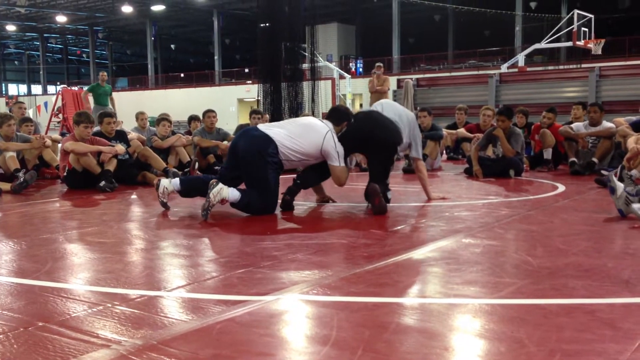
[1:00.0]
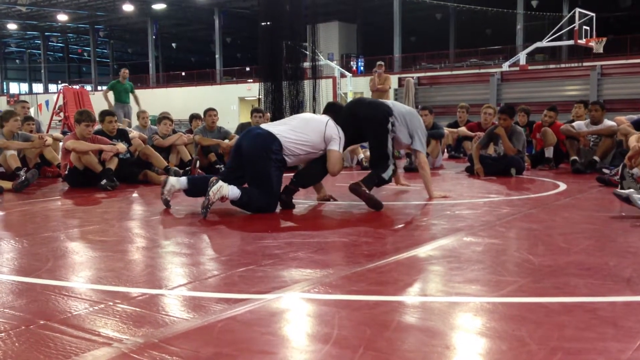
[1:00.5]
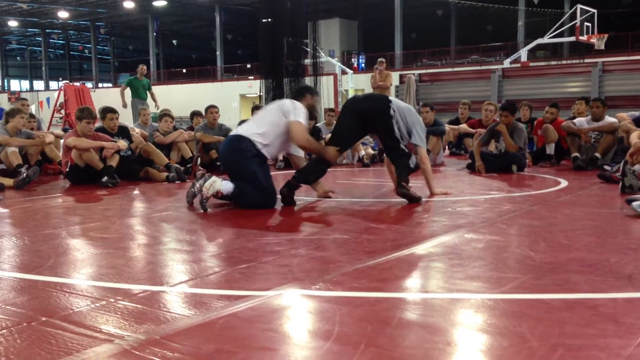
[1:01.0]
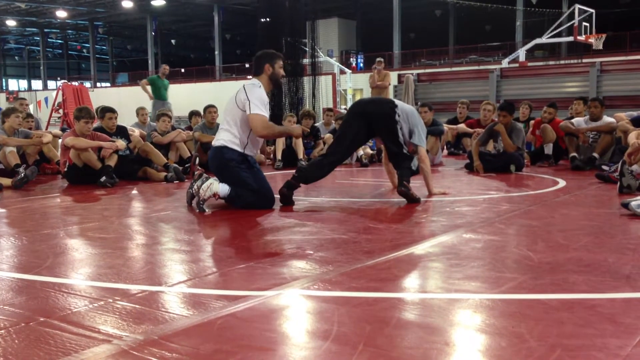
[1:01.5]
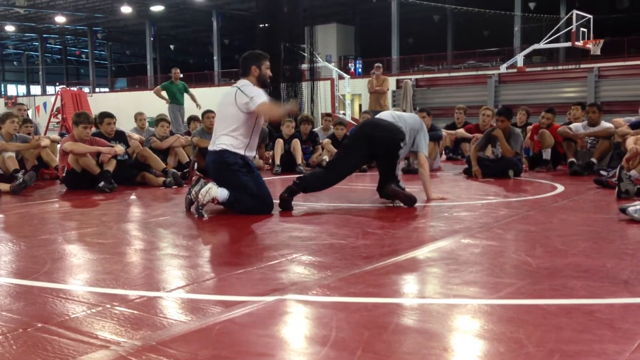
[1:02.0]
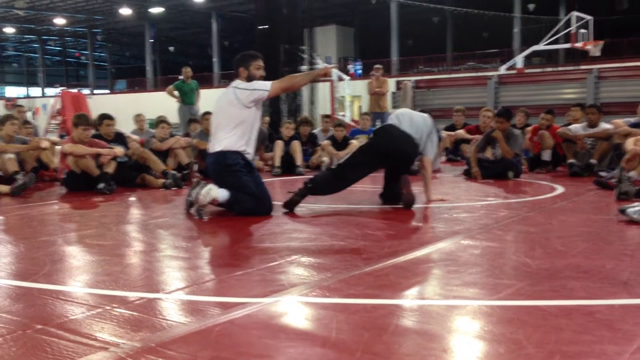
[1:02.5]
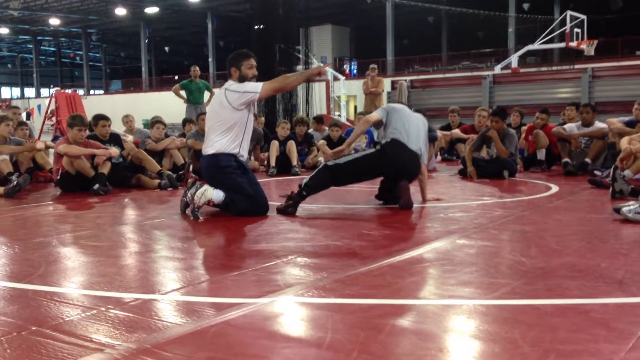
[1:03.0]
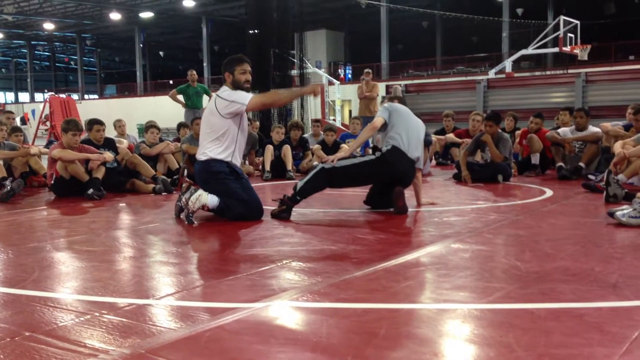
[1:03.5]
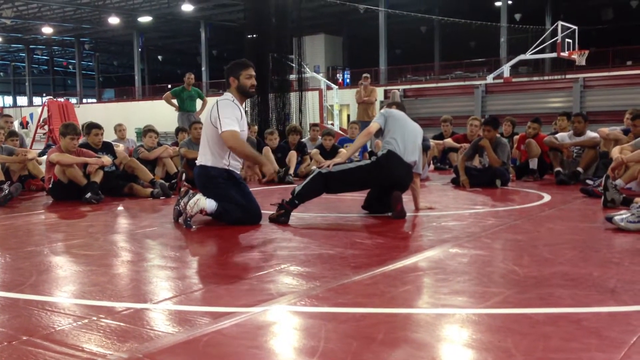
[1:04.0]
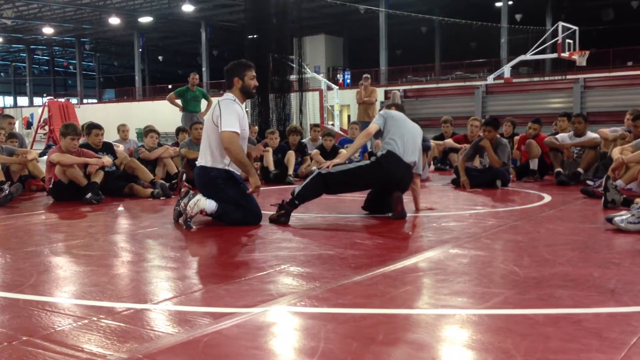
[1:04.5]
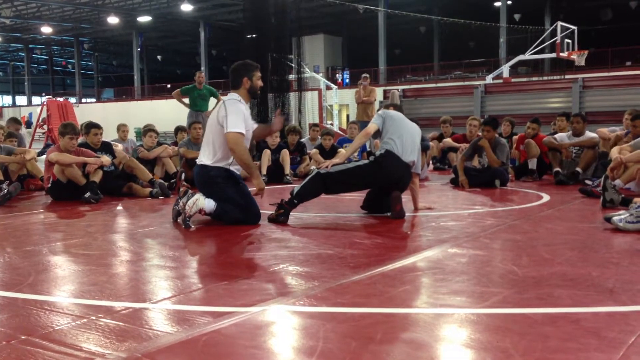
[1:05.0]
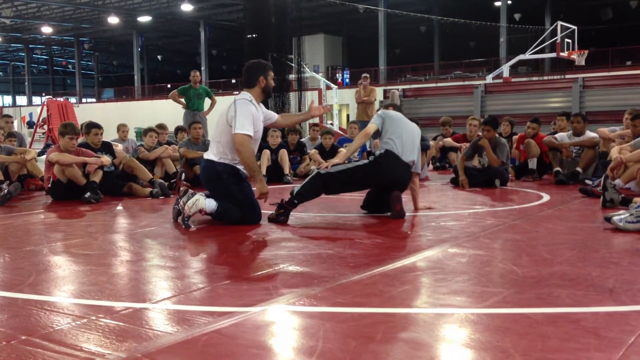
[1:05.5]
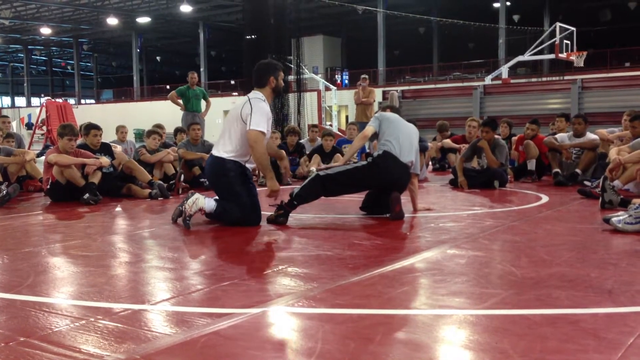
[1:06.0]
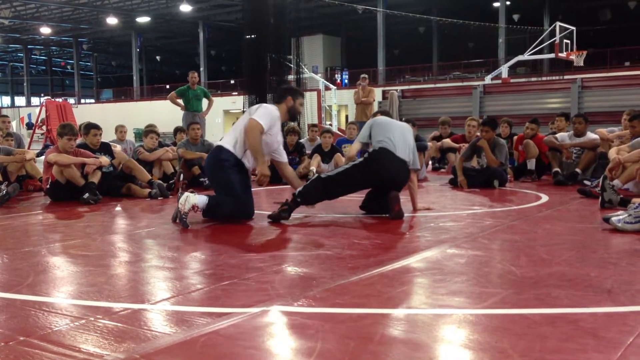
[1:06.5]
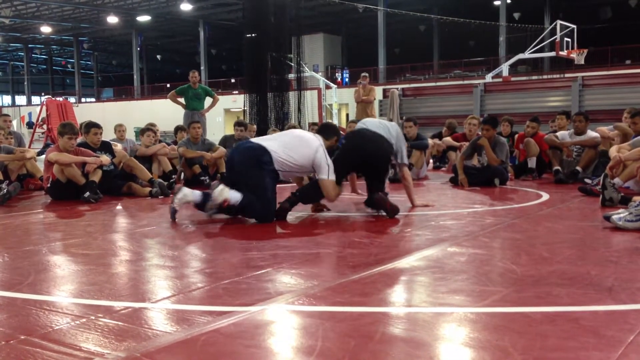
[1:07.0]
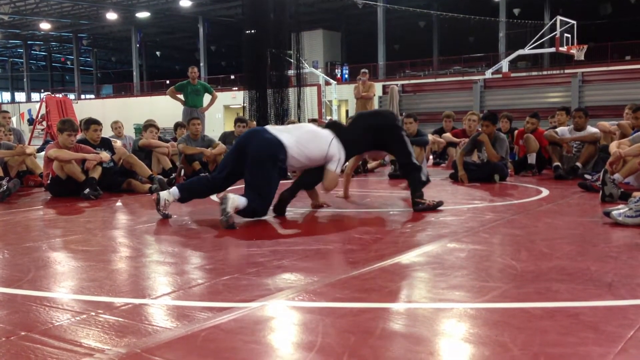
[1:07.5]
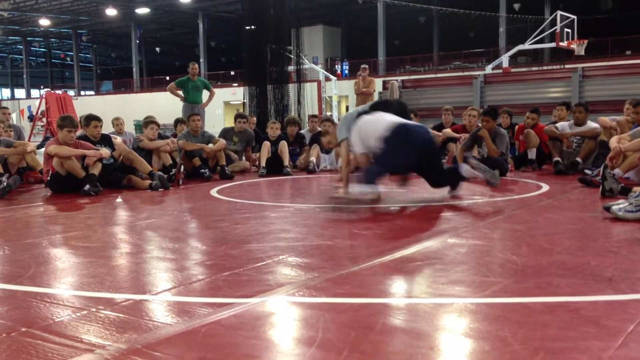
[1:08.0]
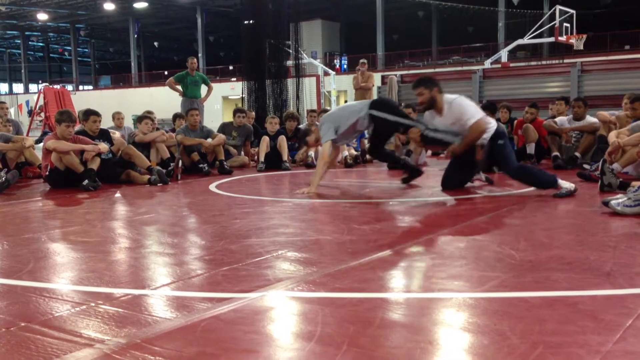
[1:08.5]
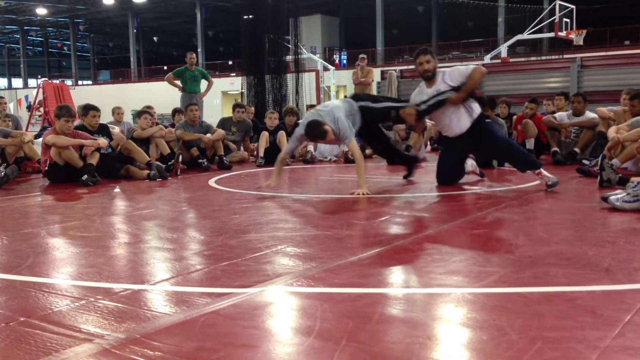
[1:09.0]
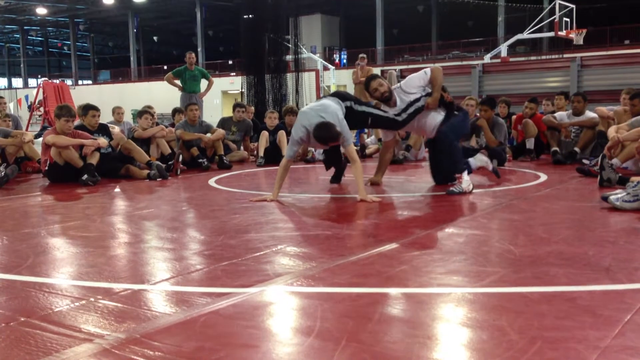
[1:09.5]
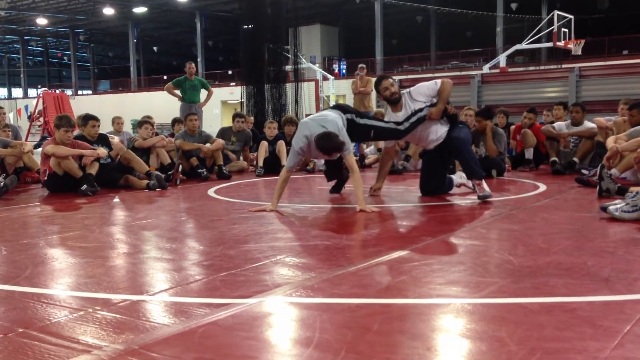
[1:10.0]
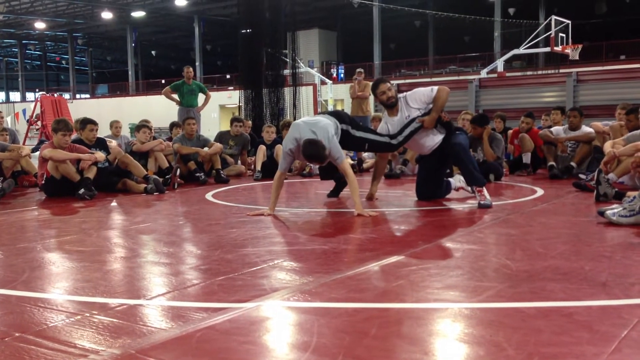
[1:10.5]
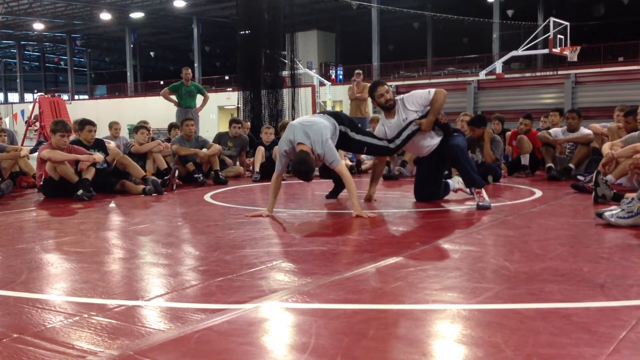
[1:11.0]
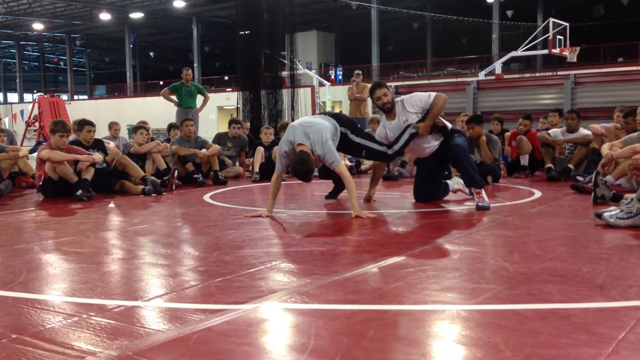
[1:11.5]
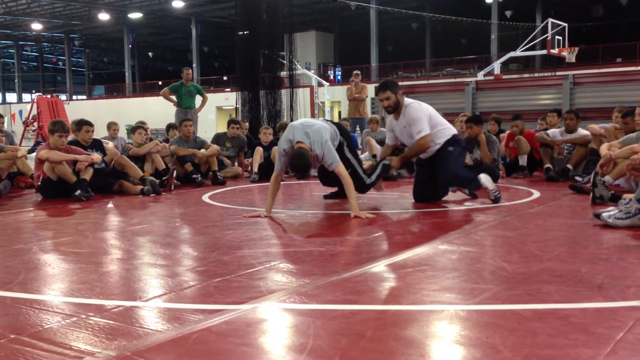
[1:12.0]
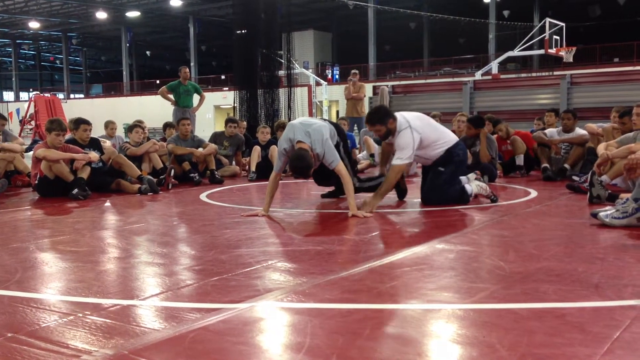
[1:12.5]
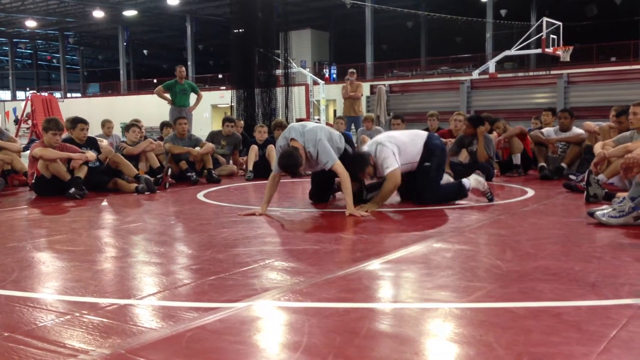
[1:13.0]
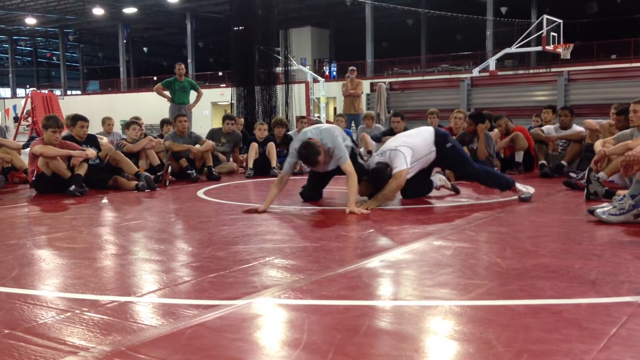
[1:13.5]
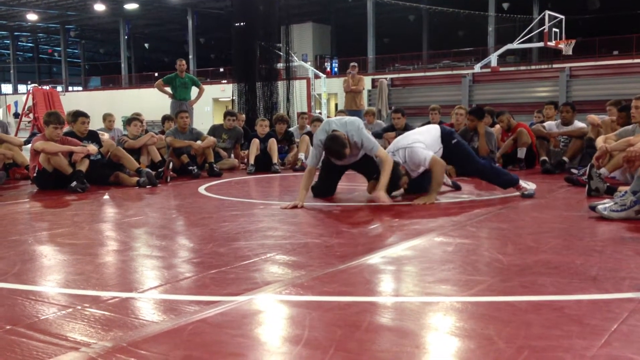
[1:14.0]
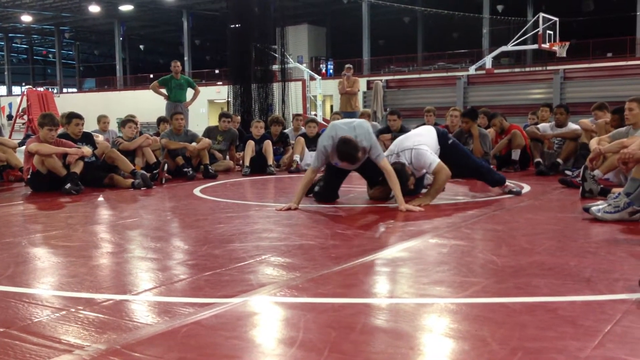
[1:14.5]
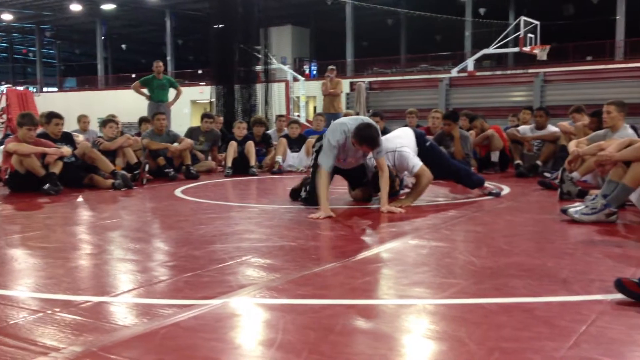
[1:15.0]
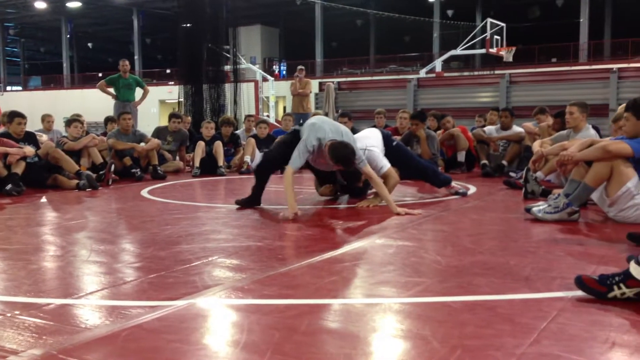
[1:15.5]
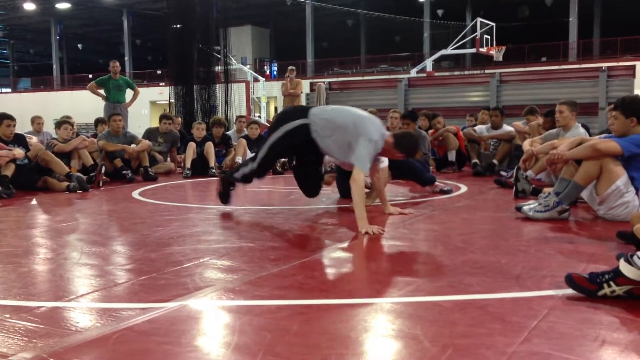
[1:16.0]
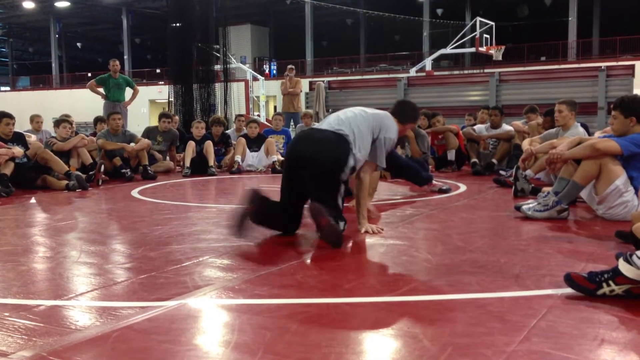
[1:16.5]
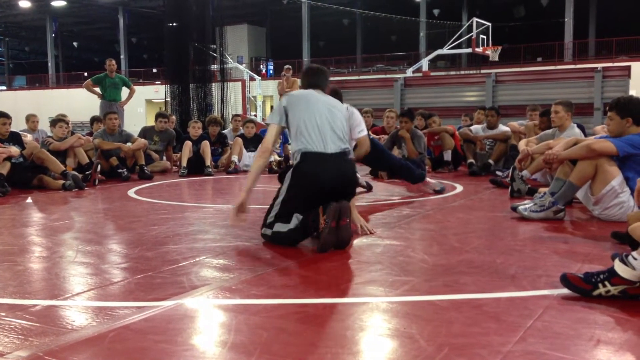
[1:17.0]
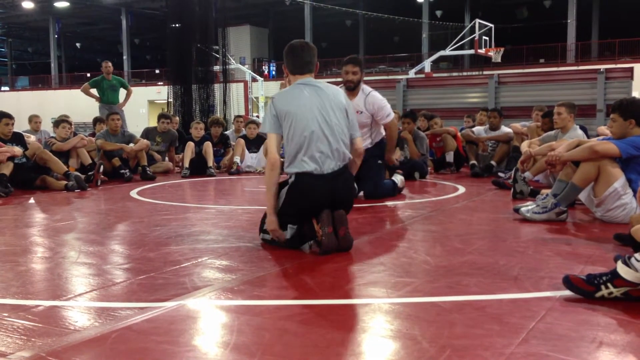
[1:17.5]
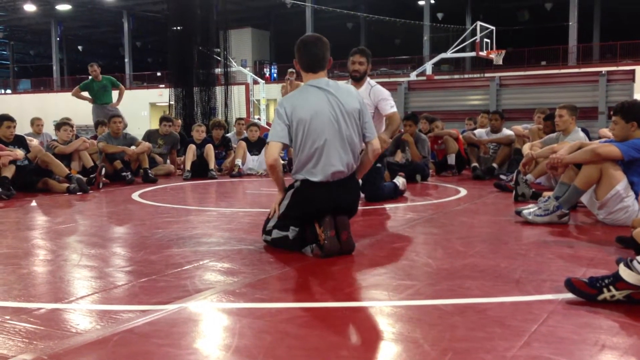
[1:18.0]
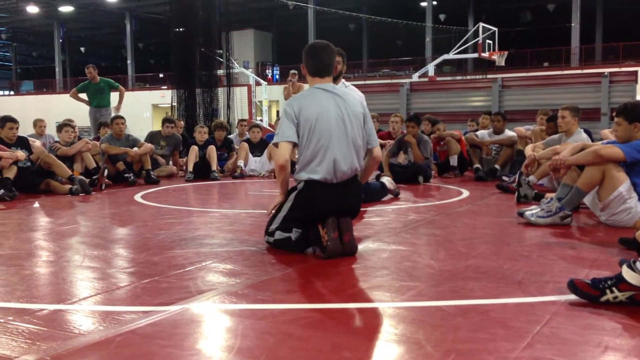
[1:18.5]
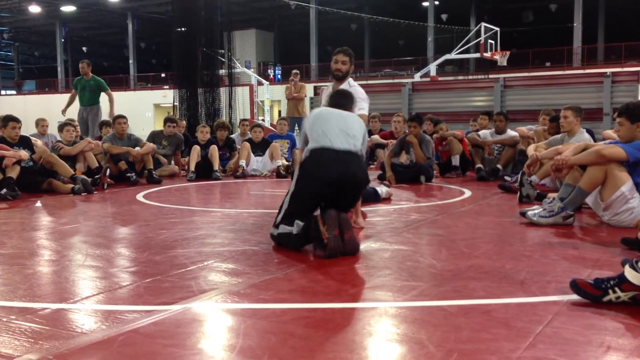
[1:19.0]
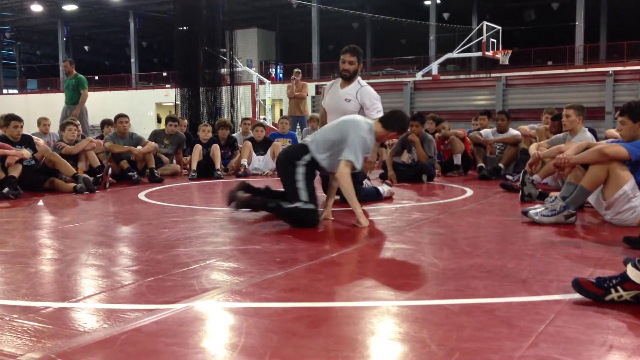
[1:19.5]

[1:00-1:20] Both men are in the center of the circle of boys, on their hands and knees, with the man in gray in front and the man in white's arm wrapped around the gray man's left leg. The man in white sits up on his knees as he talks with the boys, pointing his right arm, index finger extended, over the head of the man in gray while talking animatedly and looking at the boys, and gesturing with his open left palm. They resume the position and start circling, the man in gray using his right leg and hands for movement while the man in white has both hands on the man in gray's left leg and uses just his foot and knee for movement. They pause to speak to the boys. The man in white releases the man in gray, and they take a new position with the man in white again holding the man in gray's leg, but now with his head on the floor. The man in gray demonstrates how he gets away from the man in white. Both are then on their knees facing each other in the center of the boys, and the man in gray resumes his position in front of the man in white on his hands and knees.